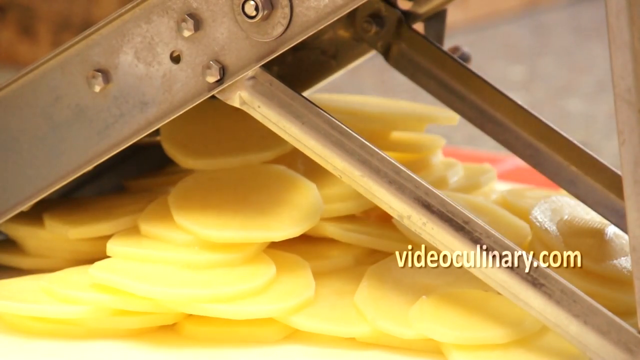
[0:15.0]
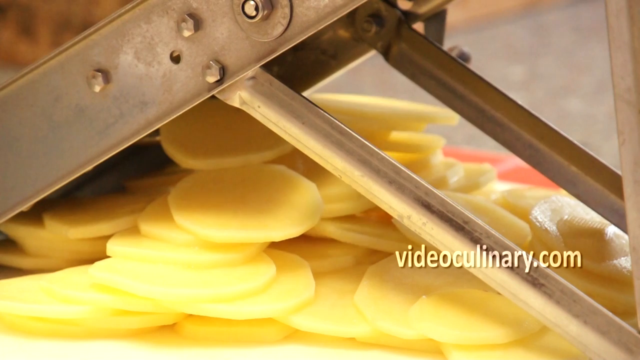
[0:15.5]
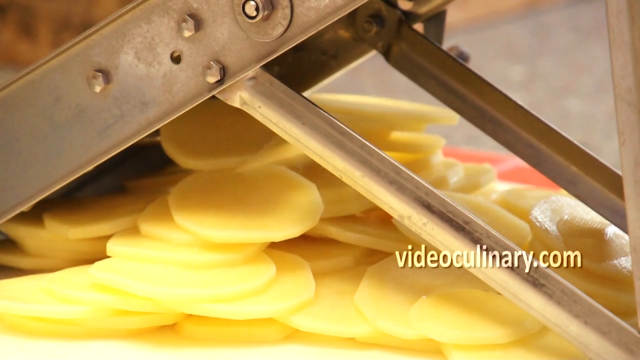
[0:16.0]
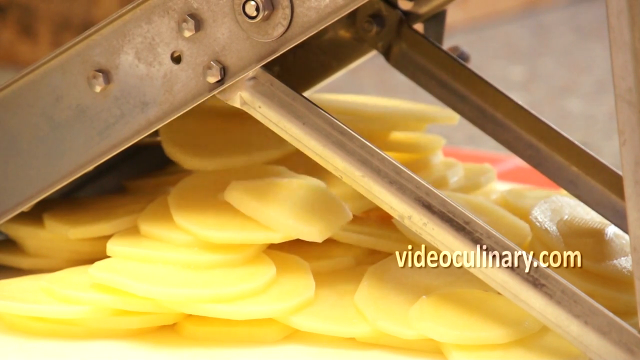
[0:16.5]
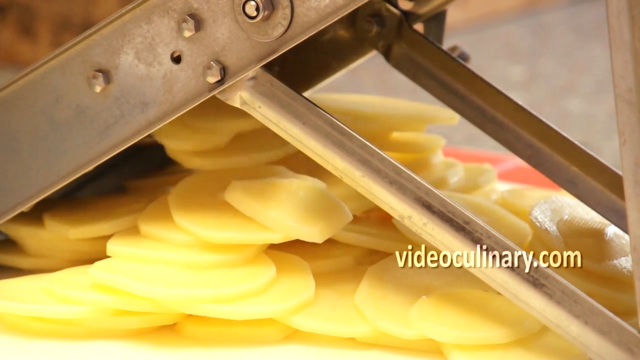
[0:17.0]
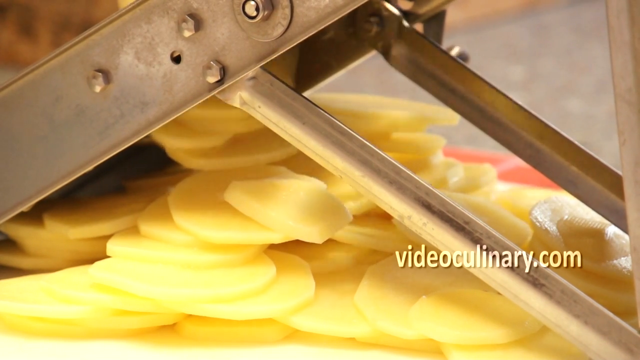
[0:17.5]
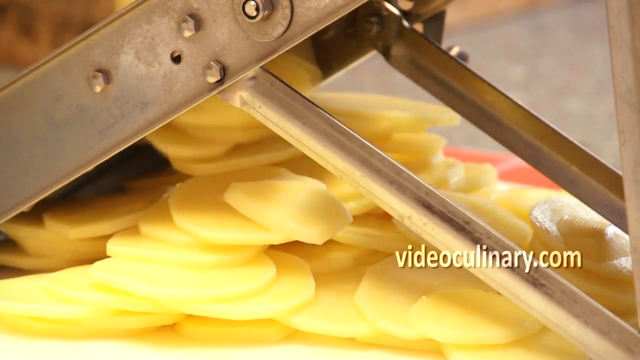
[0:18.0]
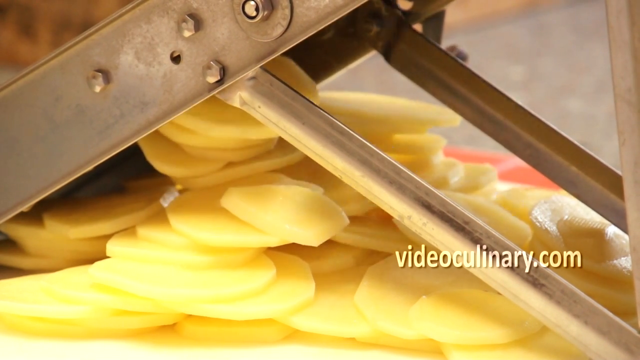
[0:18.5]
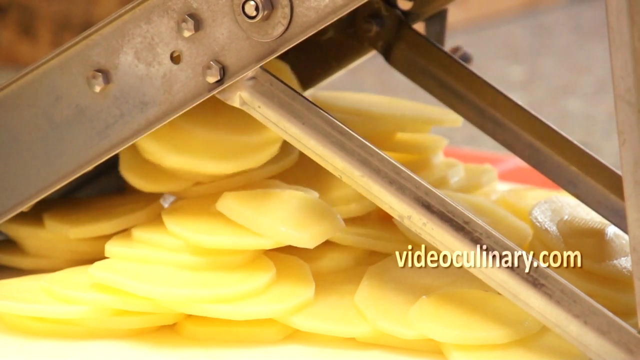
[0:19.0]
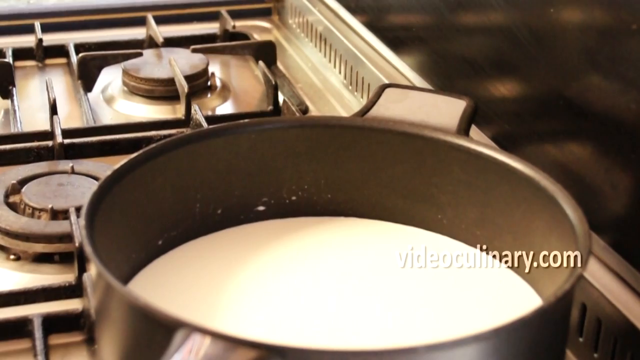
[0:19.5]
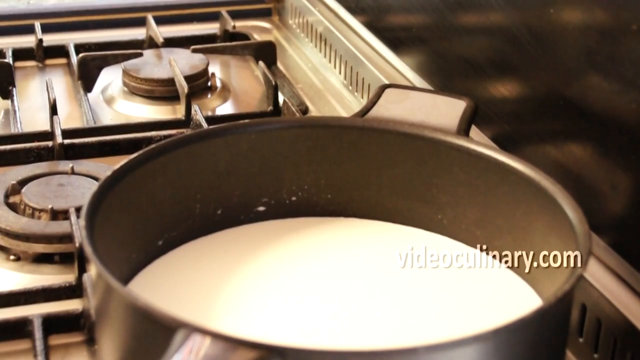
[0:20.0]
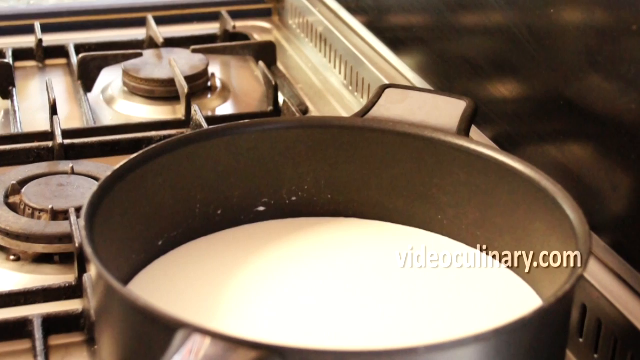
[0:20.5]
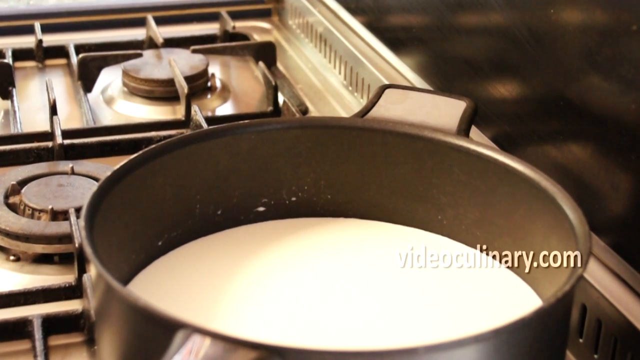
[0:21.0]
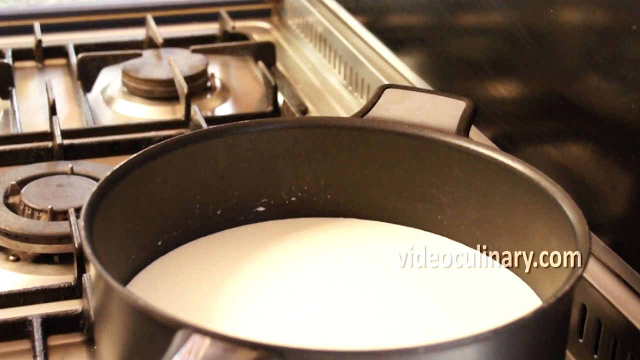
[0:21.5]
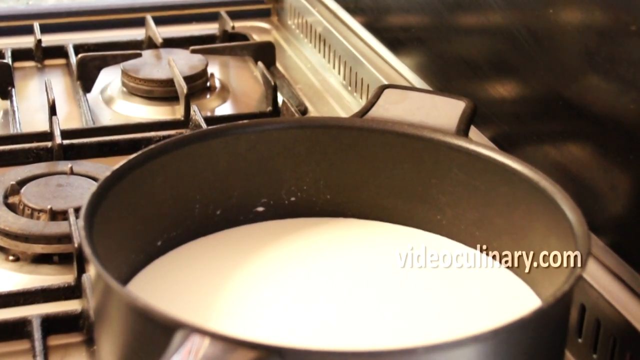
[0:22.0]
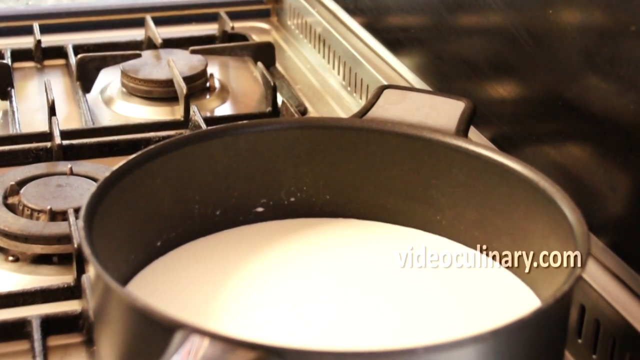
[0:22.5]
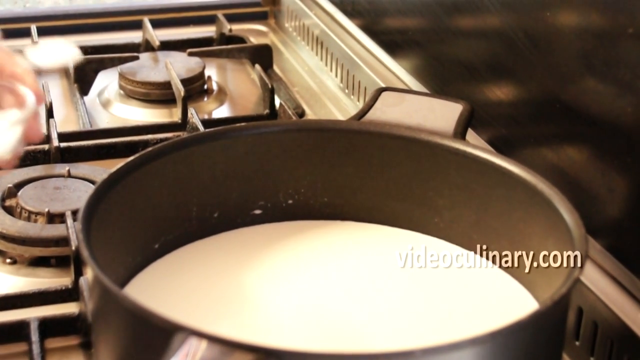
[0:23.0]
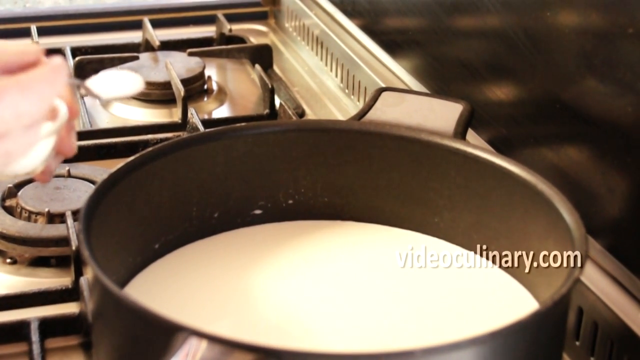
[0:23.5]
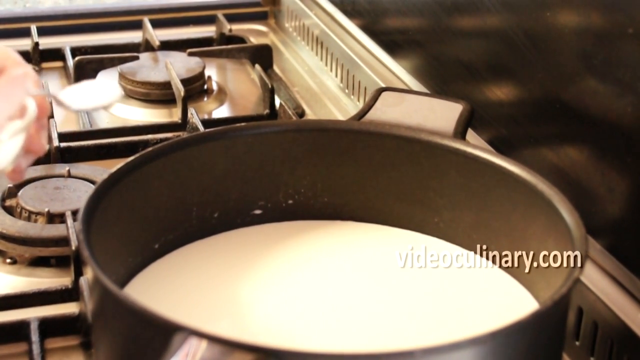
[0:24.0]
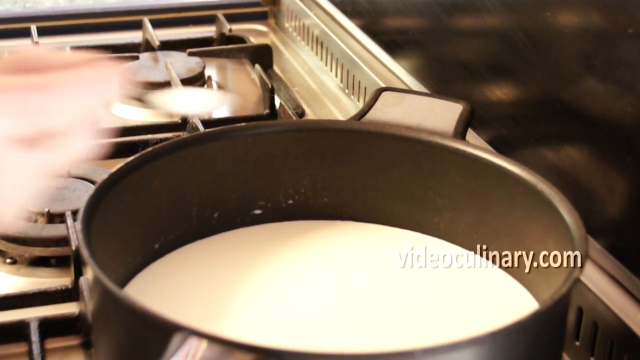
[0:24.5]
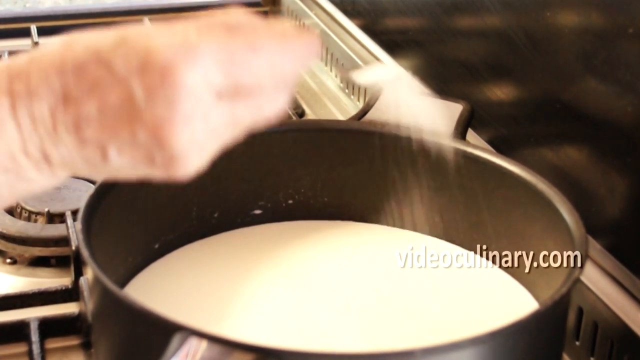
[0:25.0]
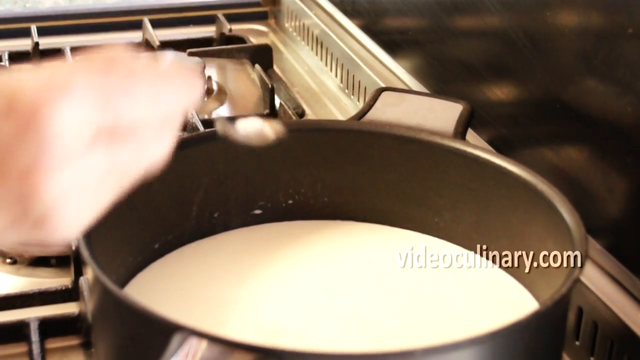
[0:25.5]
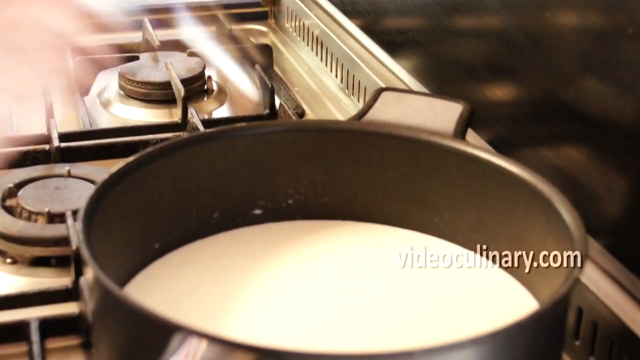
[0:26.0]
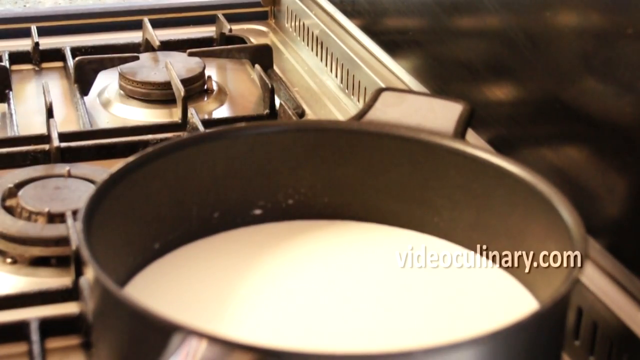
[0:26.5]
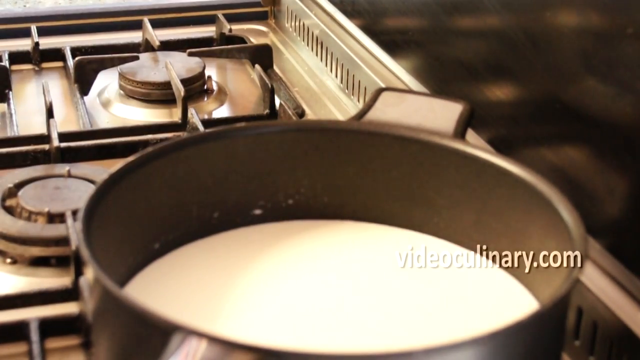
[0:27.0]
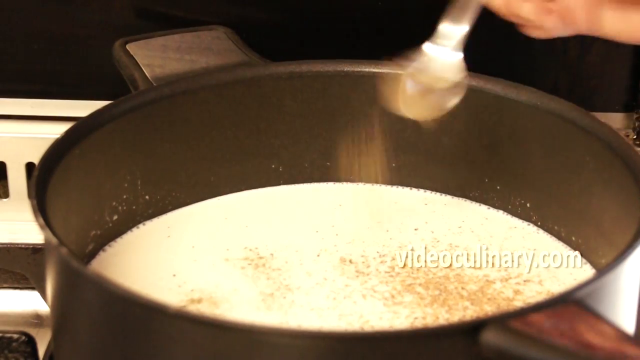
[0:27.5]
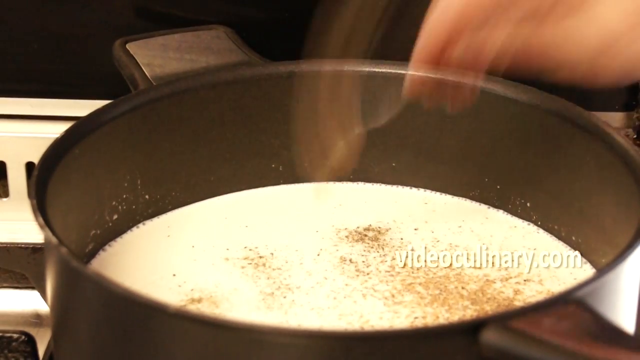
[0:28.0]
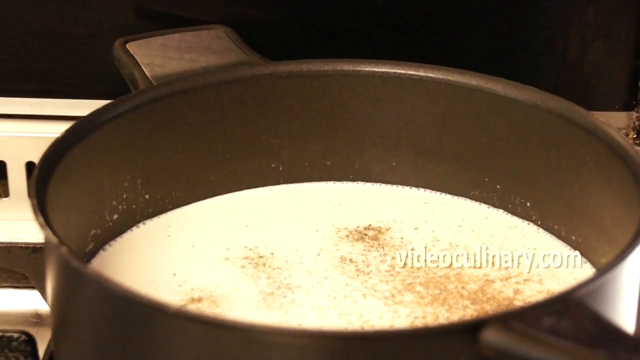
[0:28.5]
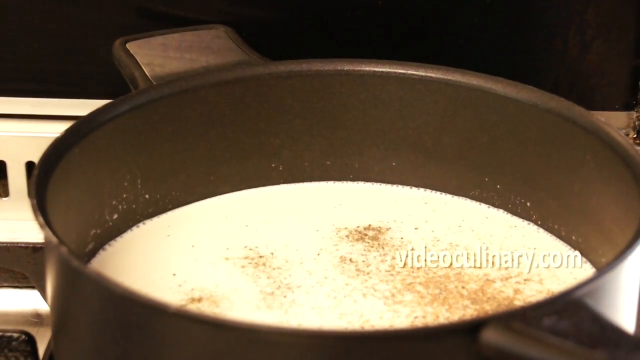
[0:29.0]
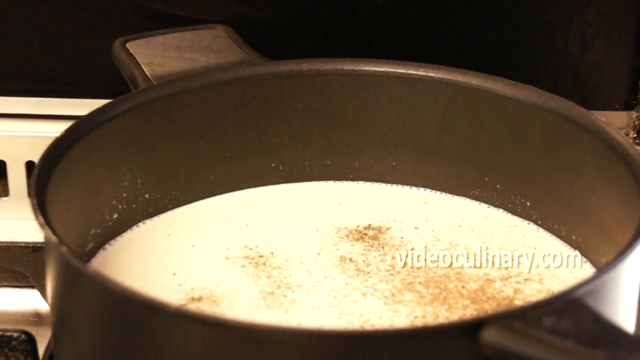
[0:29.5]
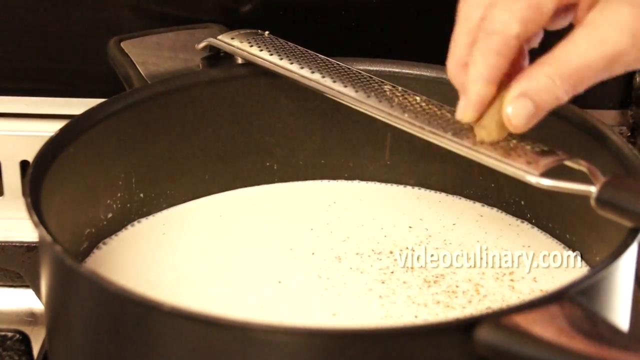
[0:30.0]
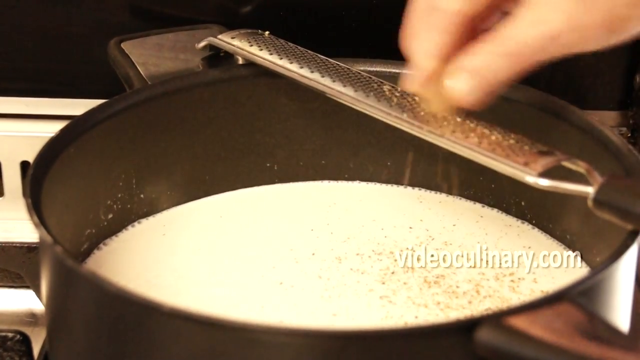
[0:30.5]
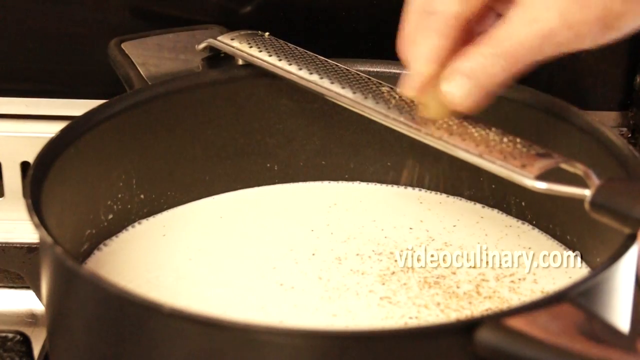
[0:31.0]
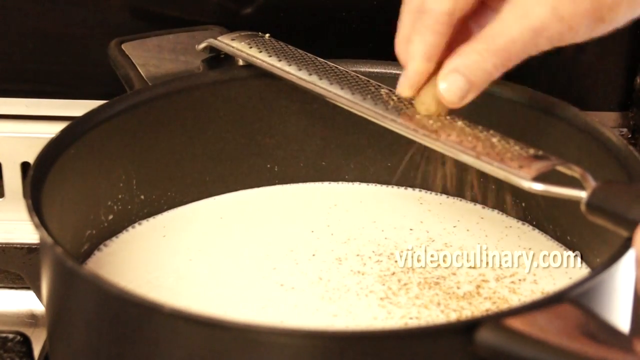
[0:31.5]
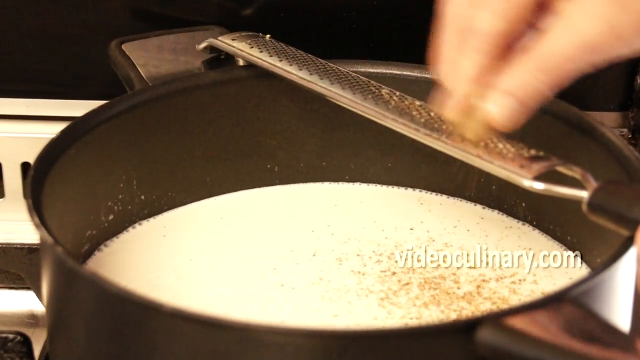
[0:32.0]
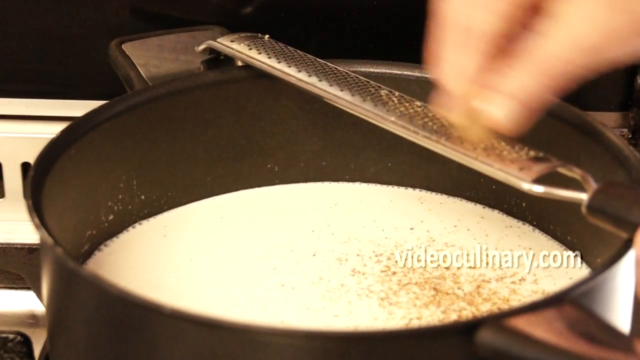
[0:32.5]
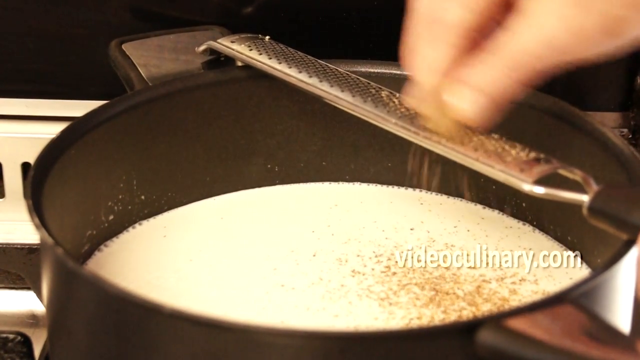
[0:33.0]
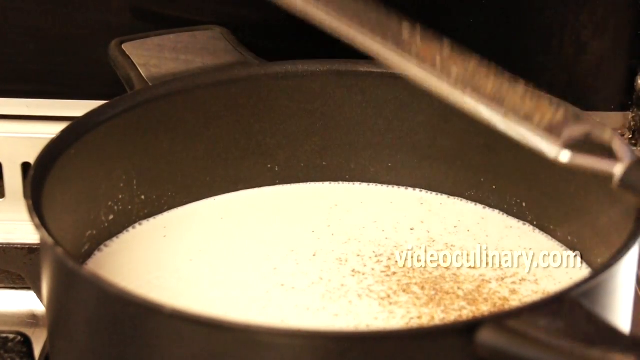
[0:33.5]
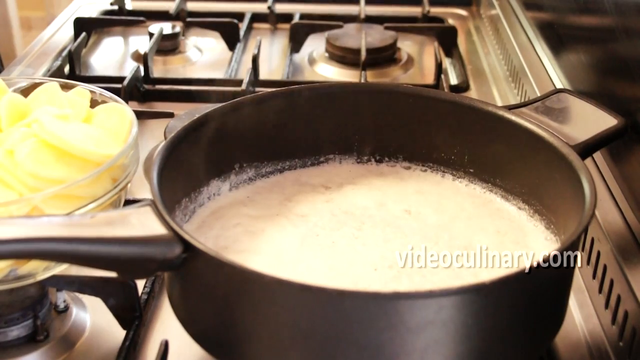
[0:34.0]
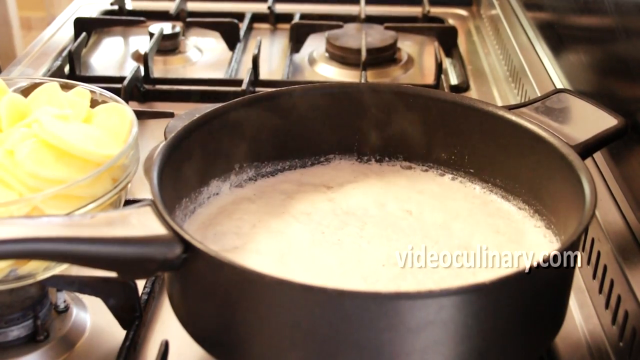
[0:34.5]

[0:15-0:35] Raw potato slices lie in a pile underneath what is apparently a metal grater, with more pieces falling out from under the grater onto the pile. Next, a black pot with white sauce inside appears to be on a burner on a stove. A hand with a spoon pours some stuff onto the white sauce, and another spoon puts more in, a brown seasoning visible on top of the white sauce. Then a hand grates something brown, not clearly identifiable, over a small grater into the black pot. A short shot shows the overall pot with everything inside it.